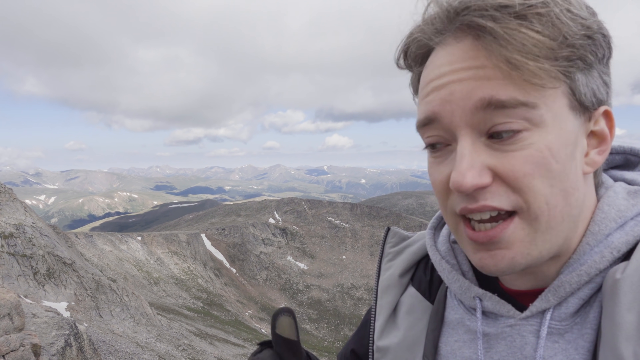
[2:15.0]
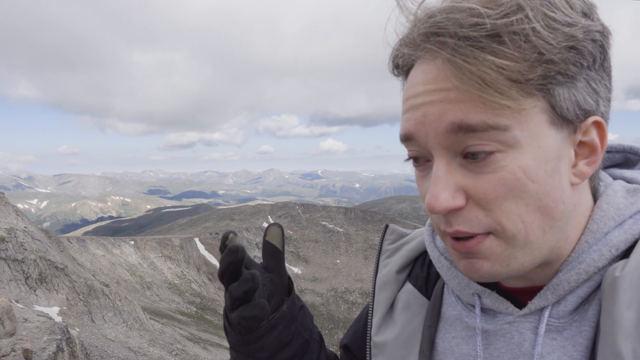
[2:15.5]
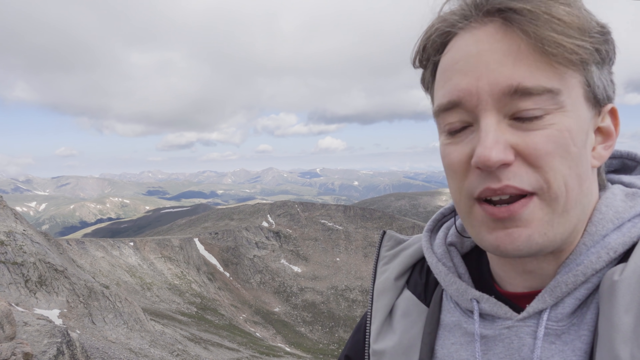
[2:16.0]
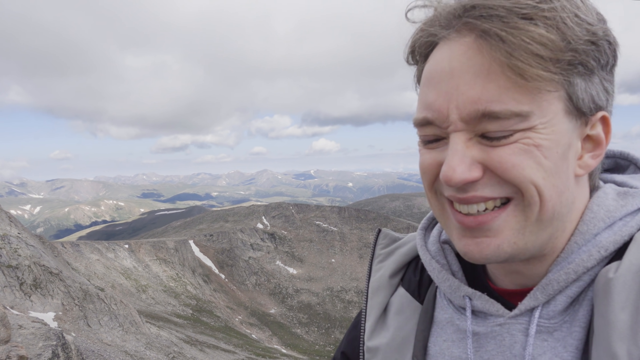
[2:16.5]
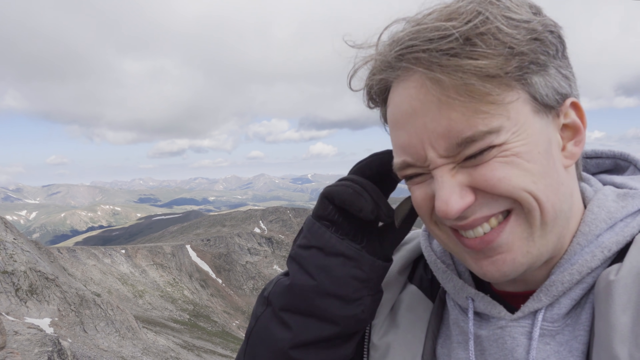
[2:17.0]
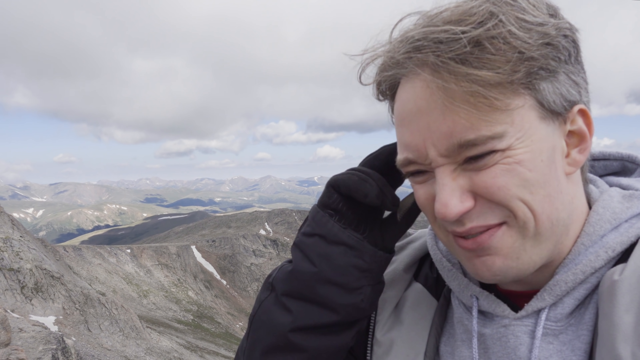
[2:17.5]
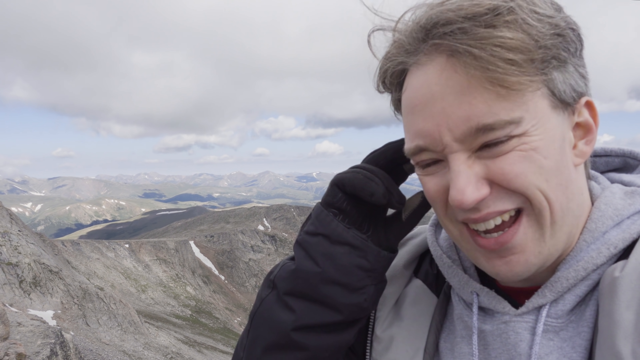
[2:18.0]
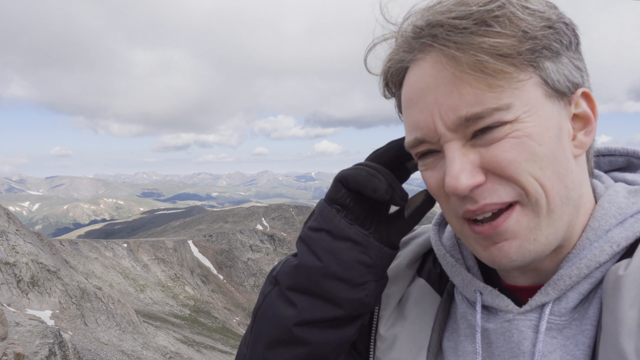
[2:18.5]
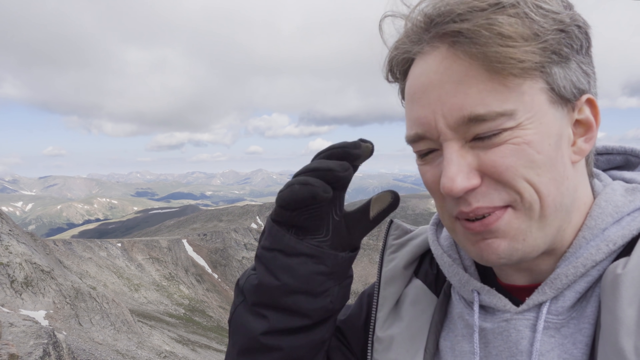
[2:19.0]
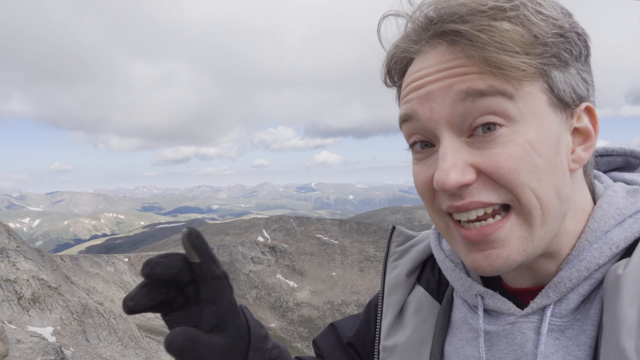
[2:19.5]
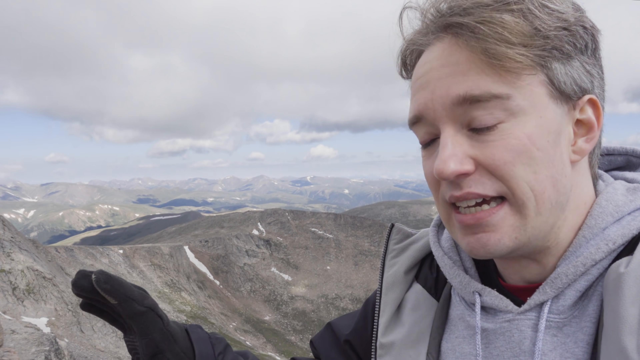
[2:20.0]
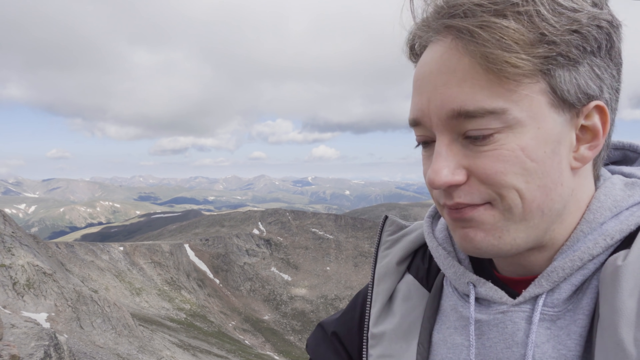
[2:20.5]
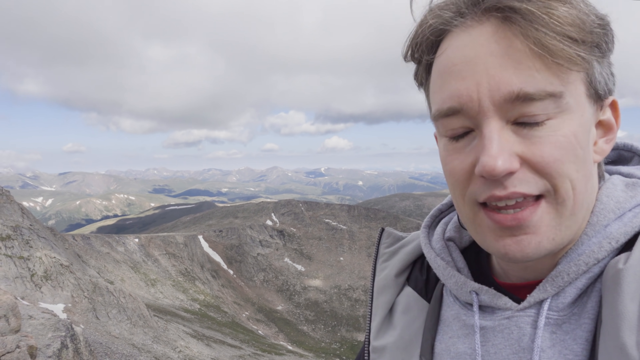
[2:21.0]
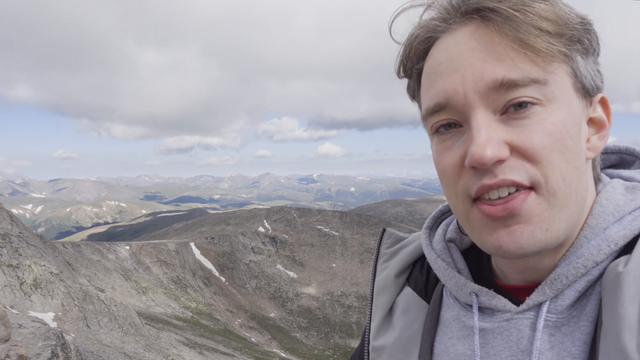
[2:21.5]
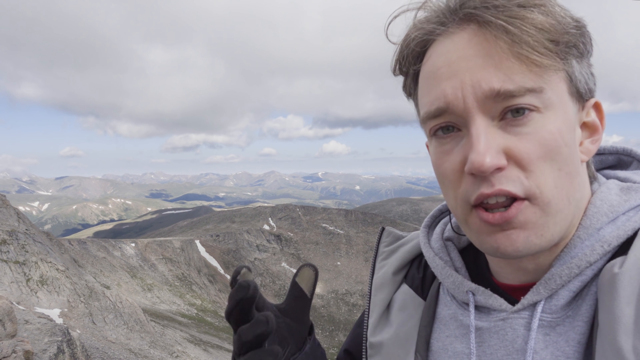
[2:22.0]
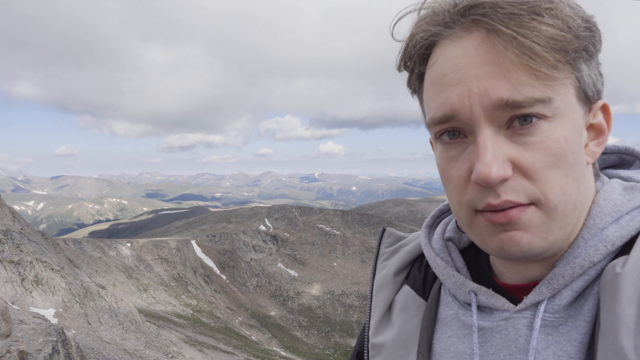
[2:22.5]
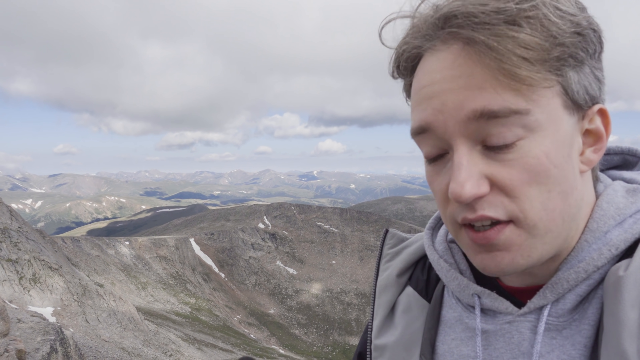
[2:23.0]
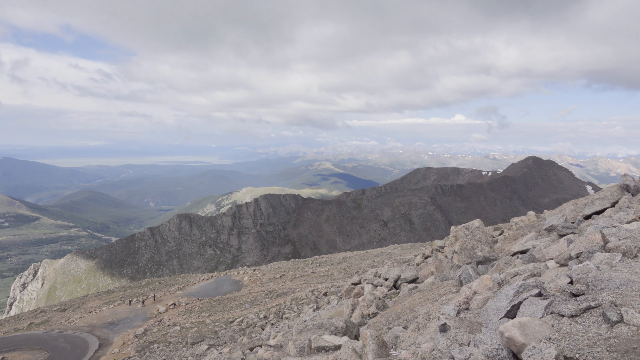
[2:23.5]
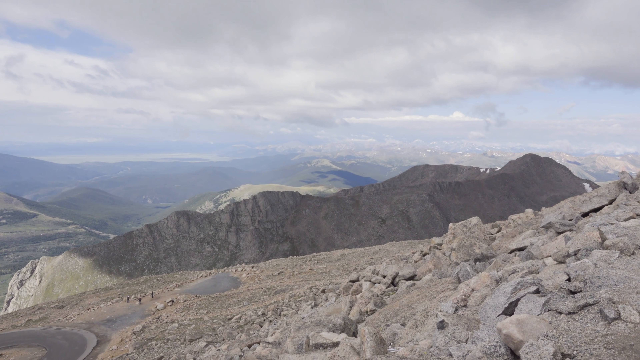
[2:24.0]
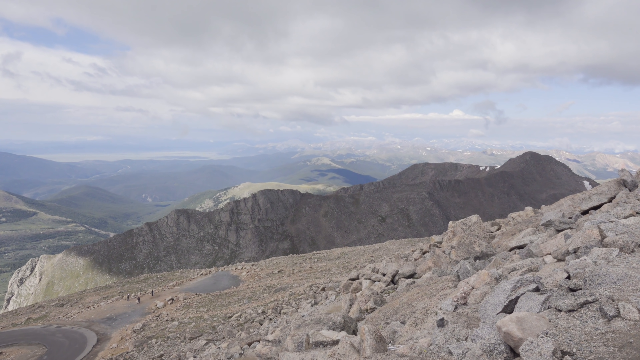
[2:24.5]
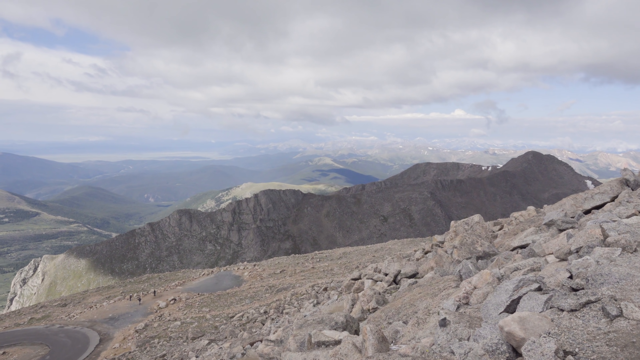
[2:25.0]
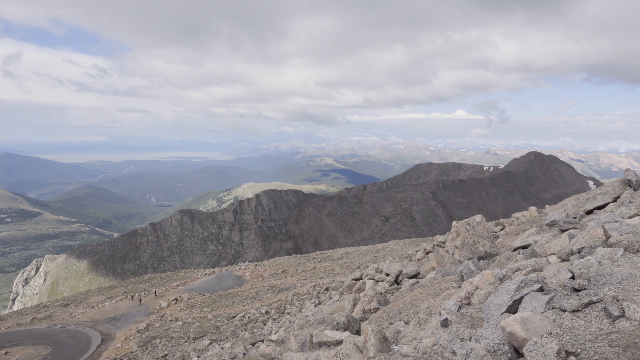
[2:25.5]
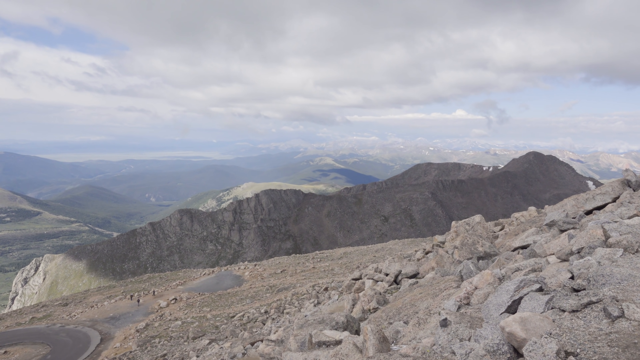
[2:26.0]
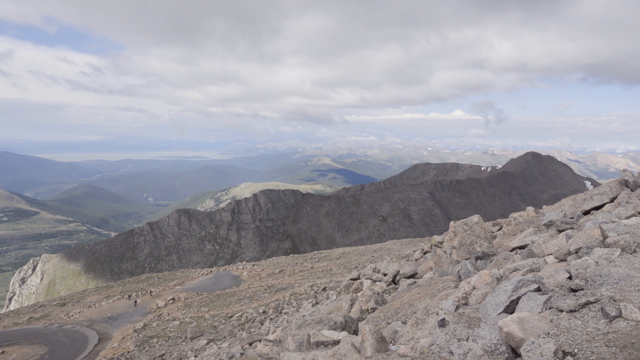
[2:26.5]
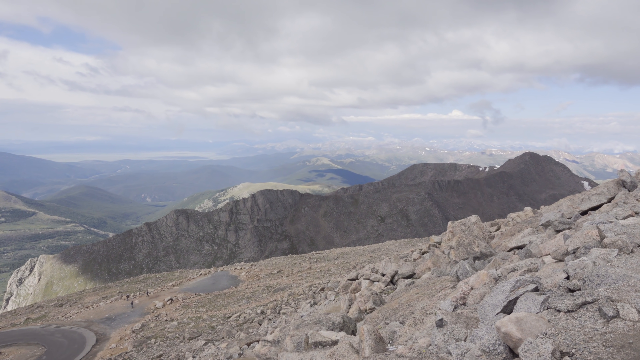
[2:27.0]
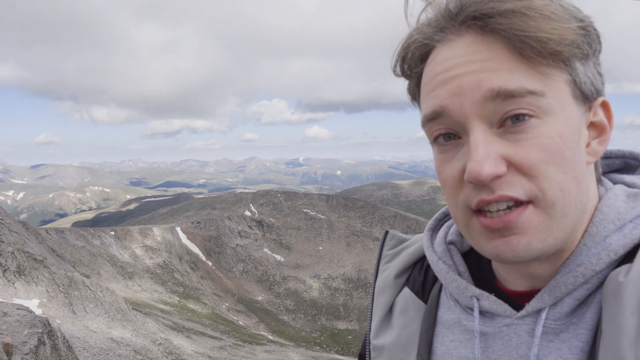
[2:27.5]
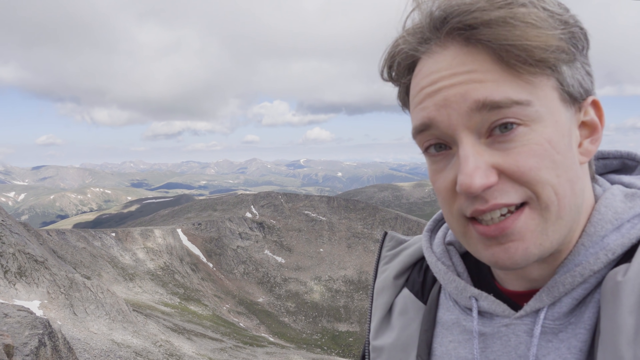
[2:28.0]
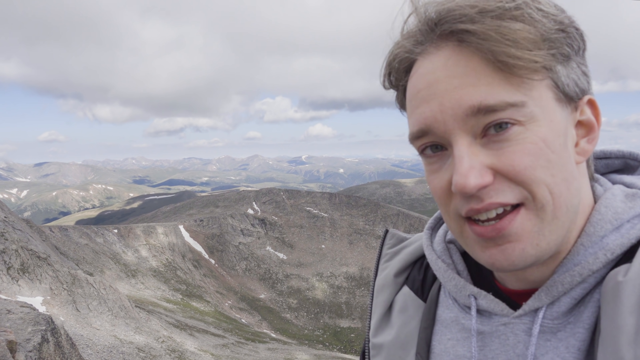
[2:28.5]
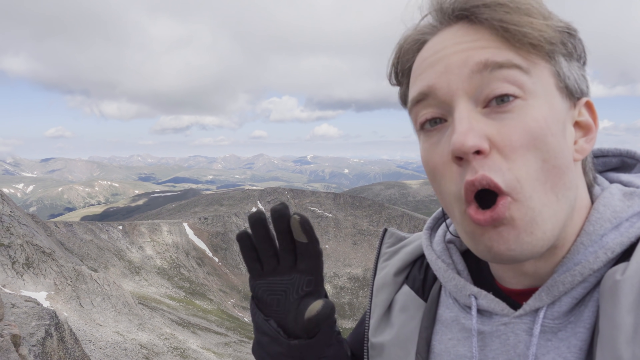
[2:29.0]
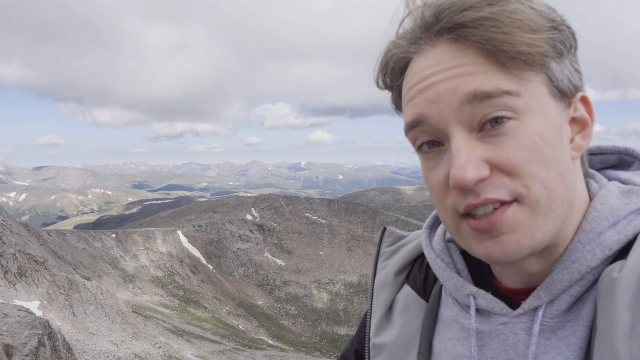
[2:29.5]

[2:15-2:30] The man is still speaking to the camera. He scratches the side of his head with his gloved right hand and looks a bit irritated and confused. The shot cuts to a dark-colored mountain in the background, with a gray, very rocky mountain in the foreground and a dark road to its left. White clouds are above in a blue sky. Behind the dark mountain there appears to be a blue body of water. The mountain appears dark because a cloud above casts a dark shadow on it; the cloud moves quickly across the mountain, darkening the entire mountain.